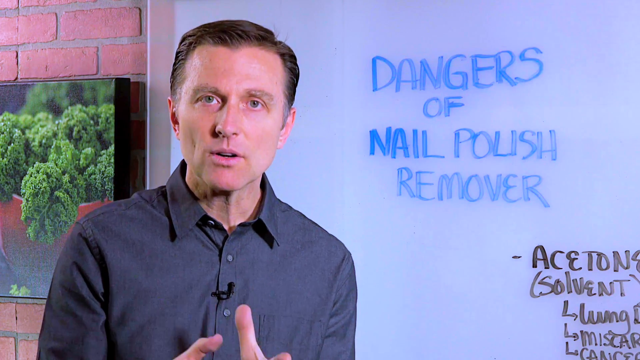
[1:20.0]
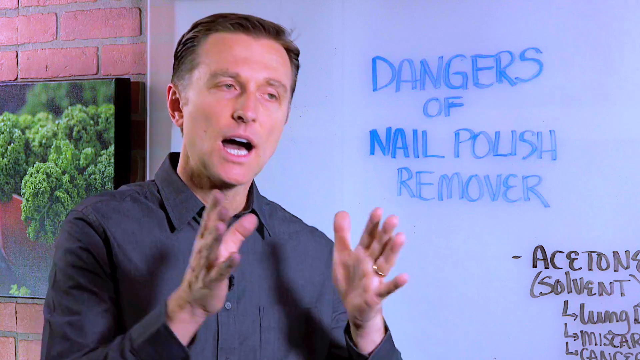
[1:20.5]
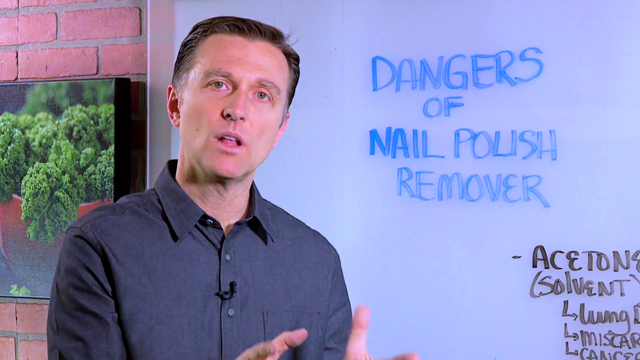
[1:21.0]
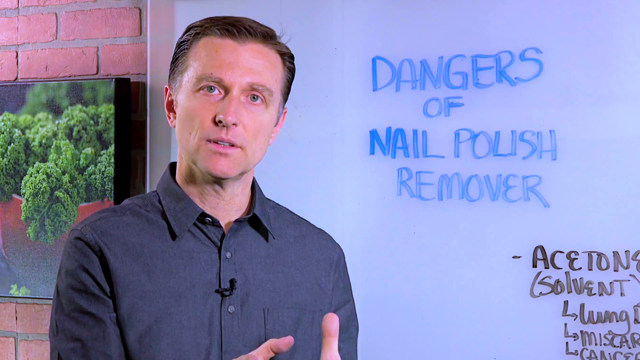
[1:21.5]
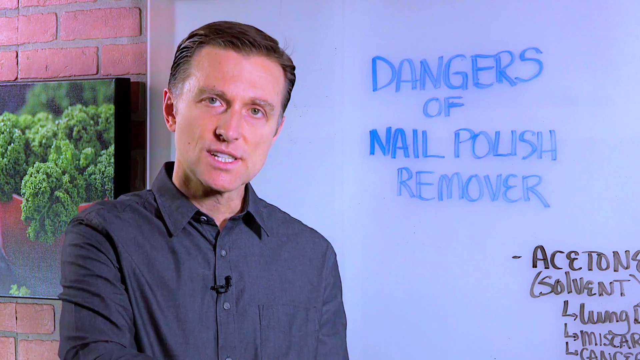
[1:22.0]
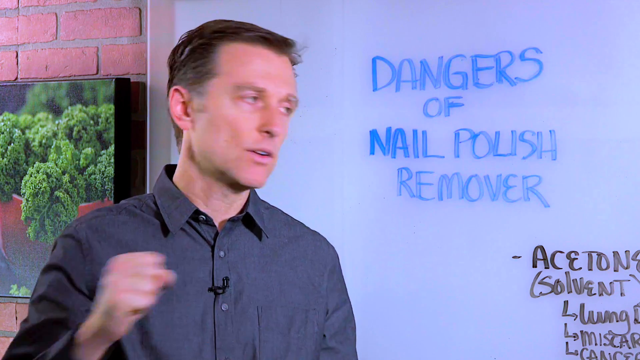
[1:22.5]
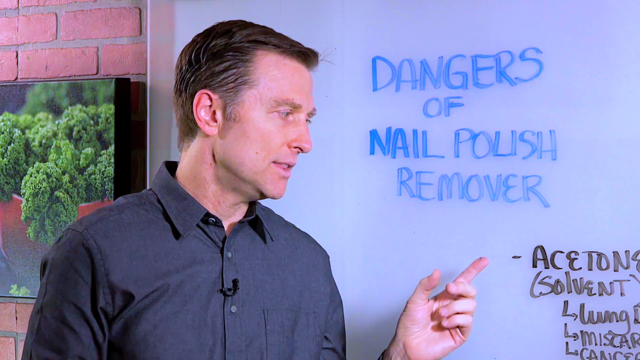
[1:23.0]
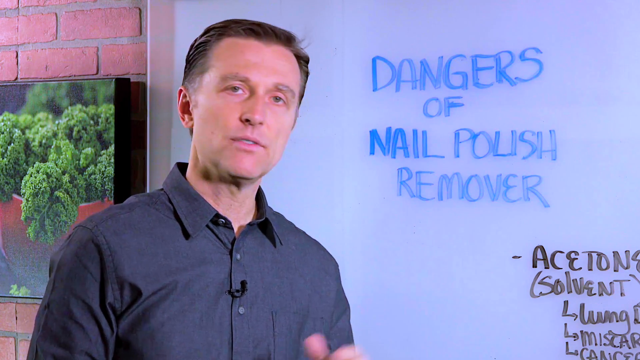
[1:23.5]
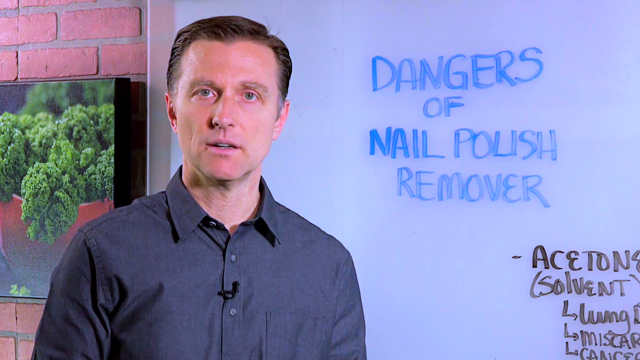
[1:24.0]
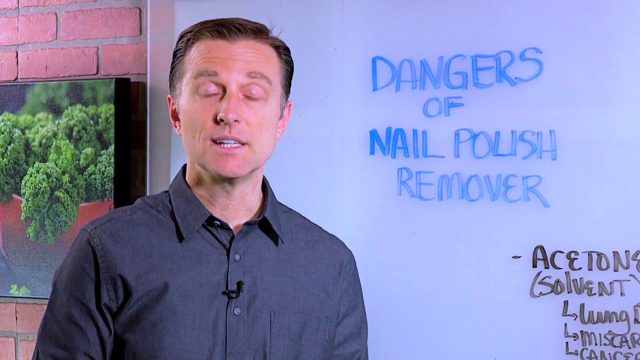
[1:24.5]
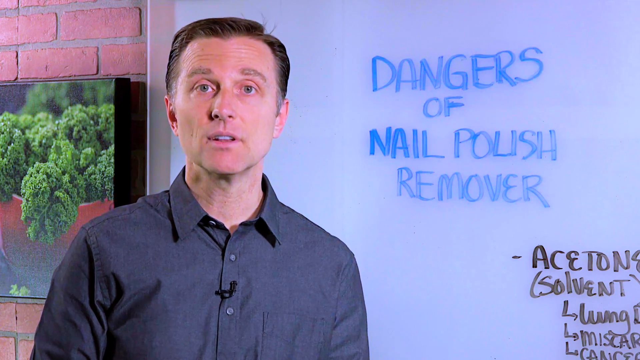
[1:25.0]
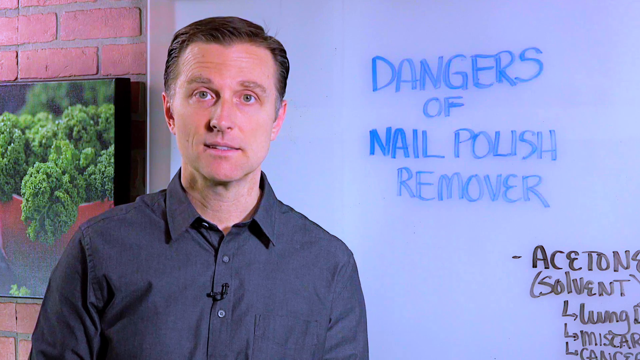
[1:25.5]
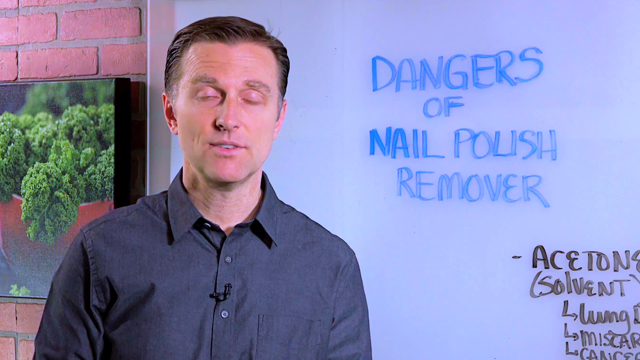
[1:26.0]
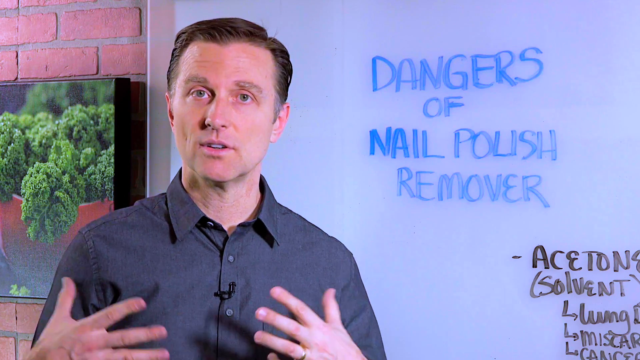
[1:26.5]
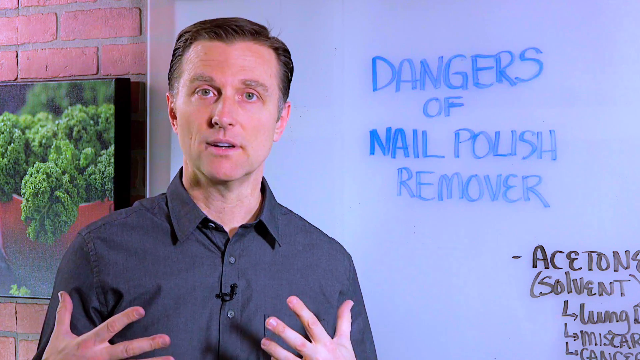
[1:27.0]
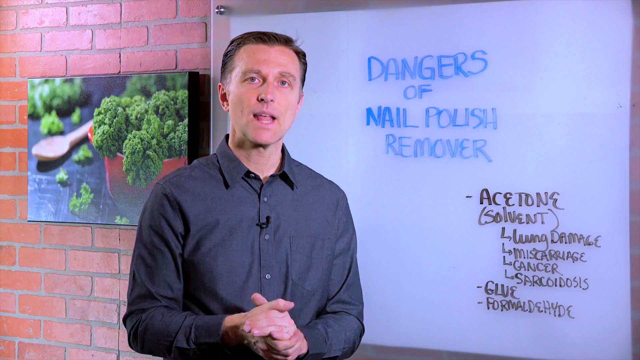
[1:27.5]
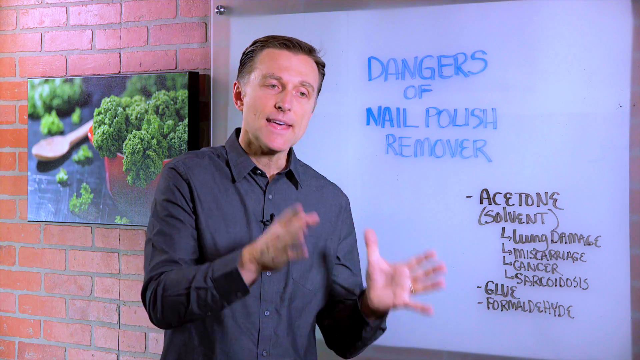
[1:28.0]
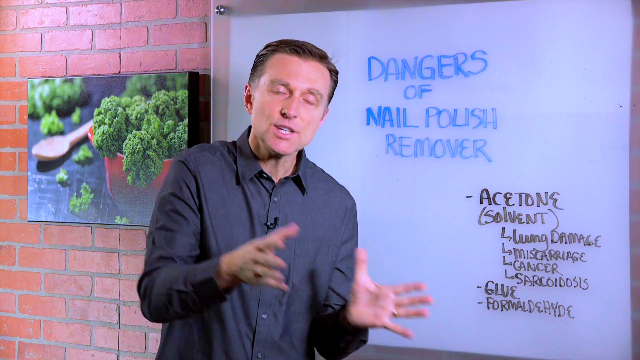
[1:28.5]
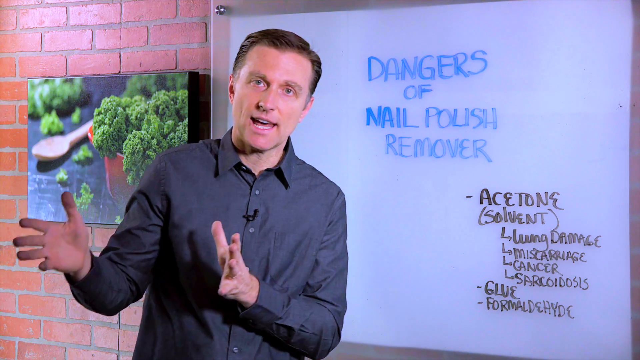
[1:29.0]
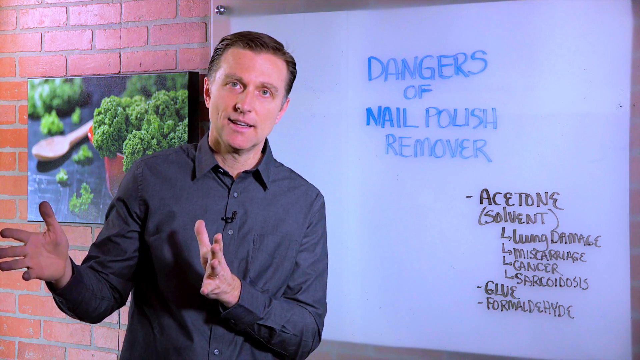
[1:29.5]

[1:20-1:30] The same gentleman in the blue shirt keeps talking, seen in the closer view. He points again to the word "acetone," this time with his left pointer finger, then turns to the camera and continues talking. The camera zooms out a little as he uses more gestures with his hands, giving a slightly wider view of him. For most of the shot, only the words "dangers of nail polish remover" and "acetone" are visible as he continues.